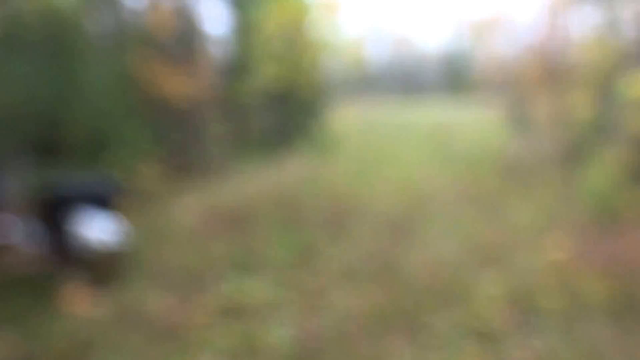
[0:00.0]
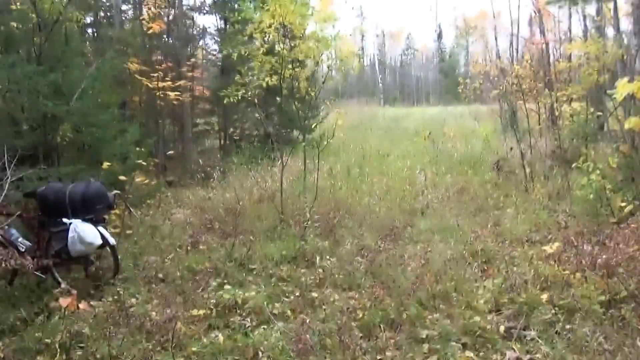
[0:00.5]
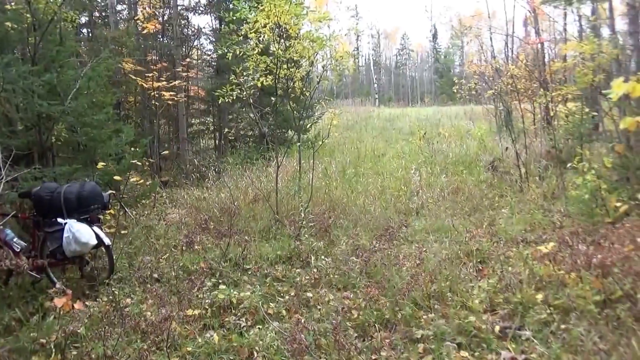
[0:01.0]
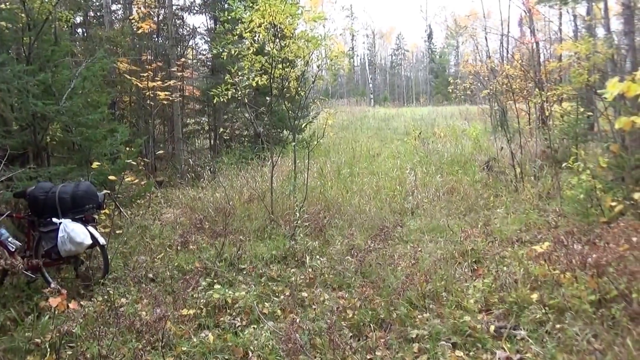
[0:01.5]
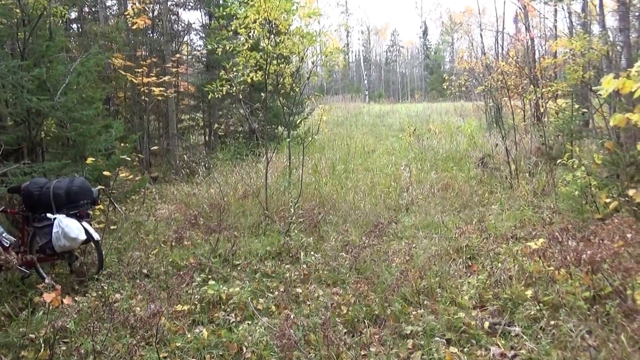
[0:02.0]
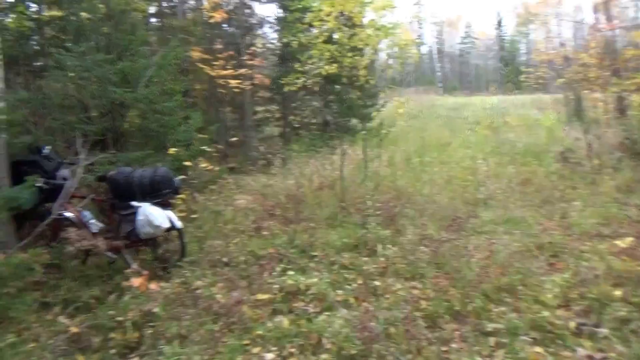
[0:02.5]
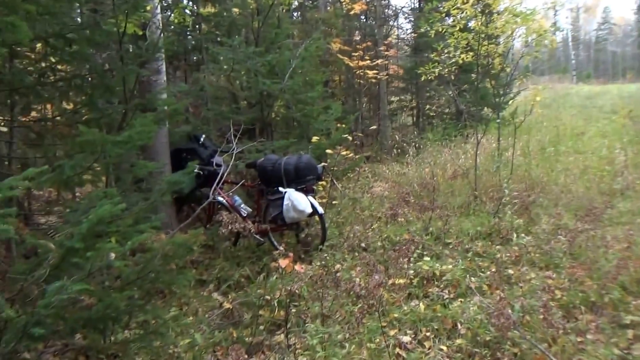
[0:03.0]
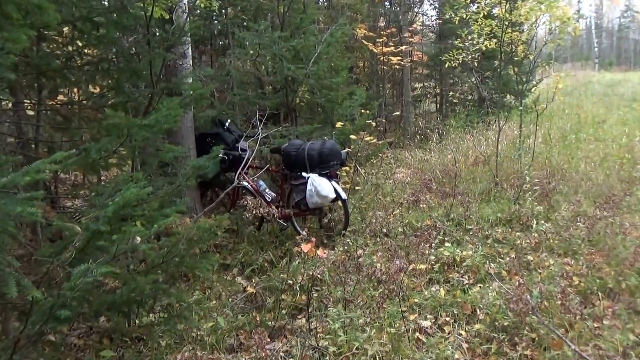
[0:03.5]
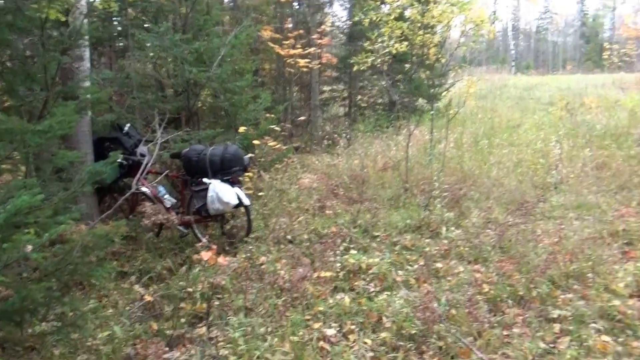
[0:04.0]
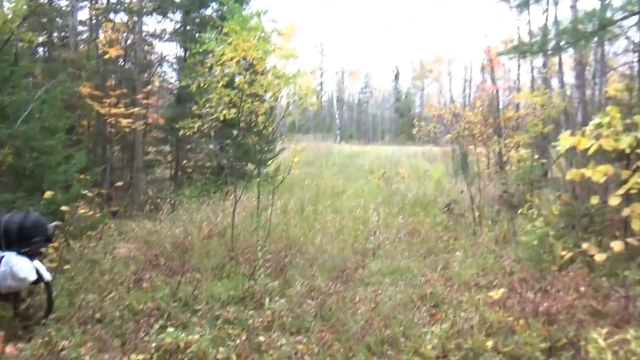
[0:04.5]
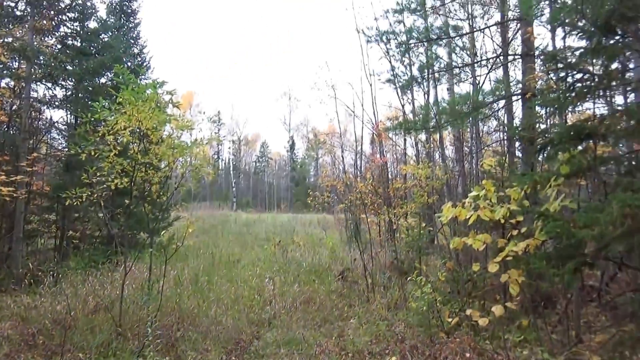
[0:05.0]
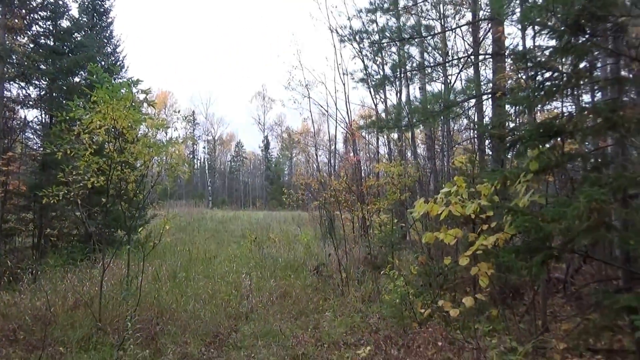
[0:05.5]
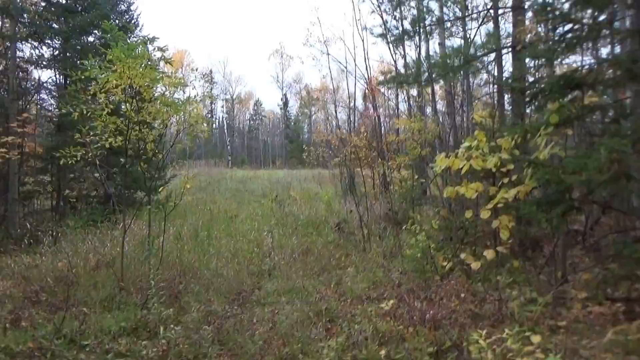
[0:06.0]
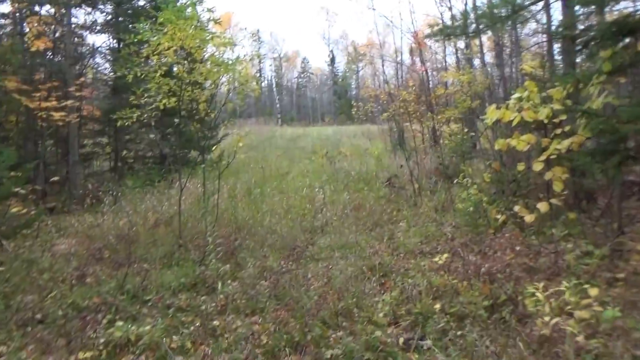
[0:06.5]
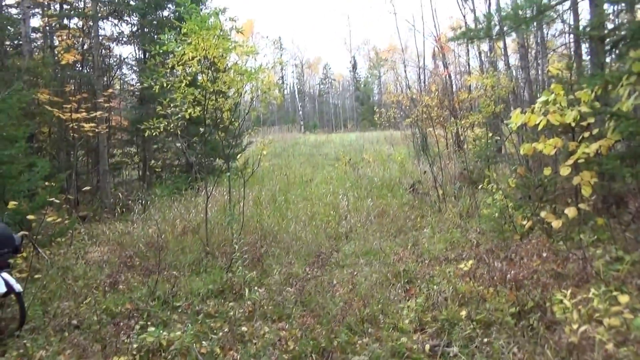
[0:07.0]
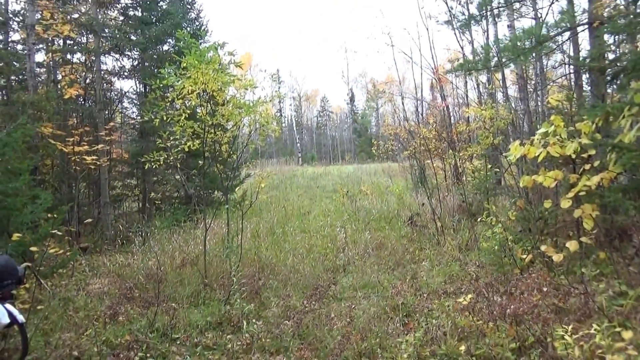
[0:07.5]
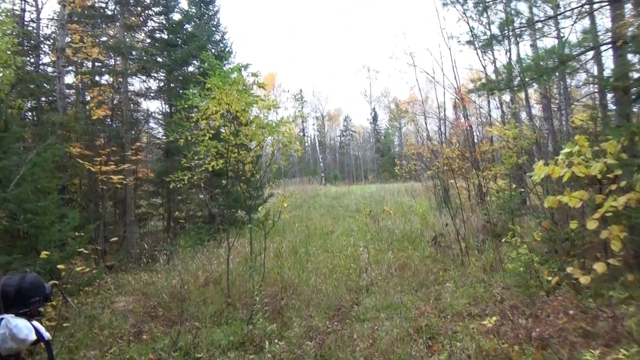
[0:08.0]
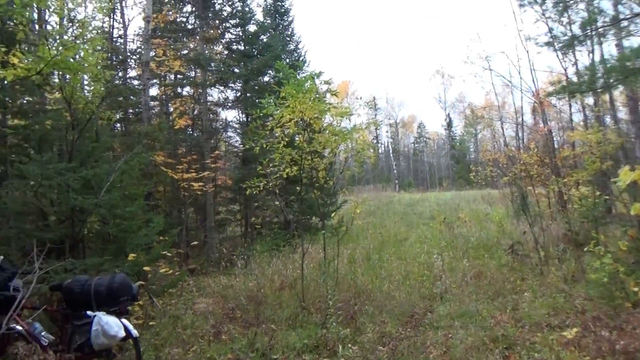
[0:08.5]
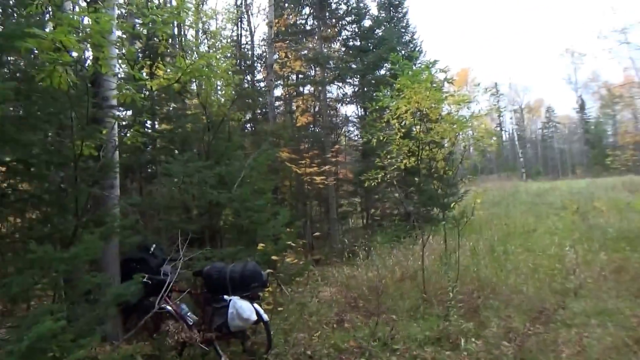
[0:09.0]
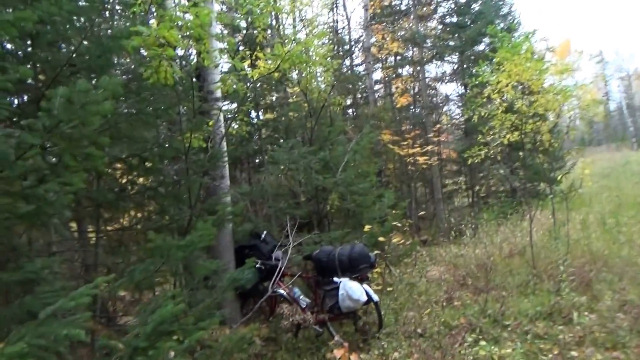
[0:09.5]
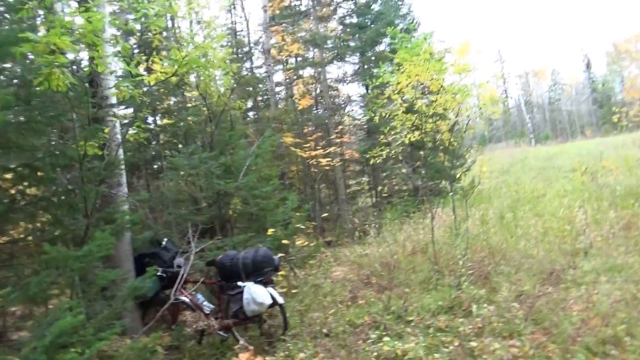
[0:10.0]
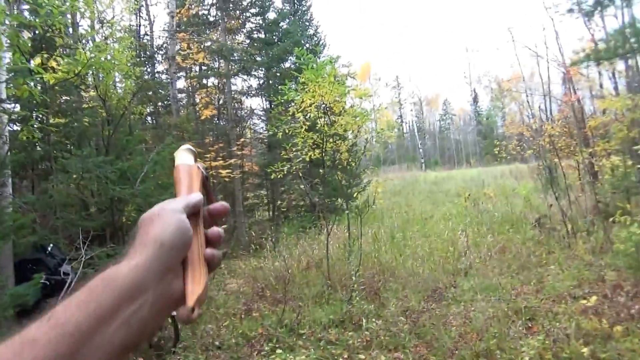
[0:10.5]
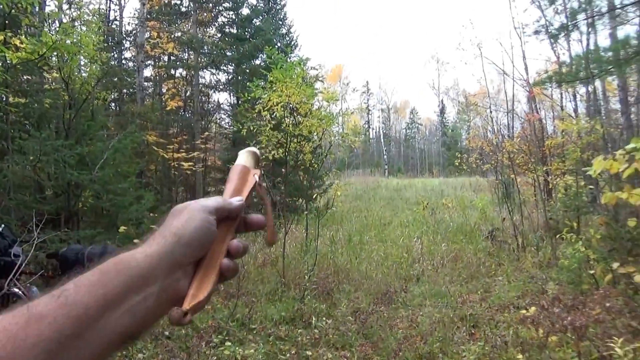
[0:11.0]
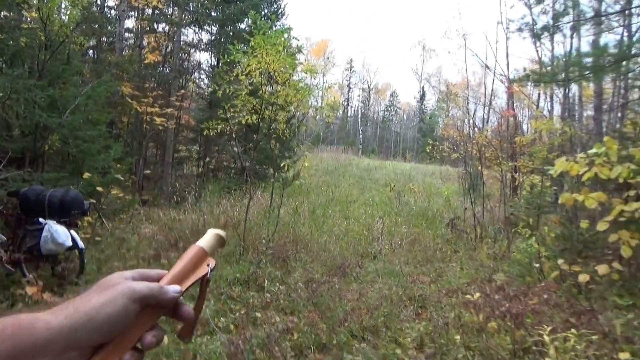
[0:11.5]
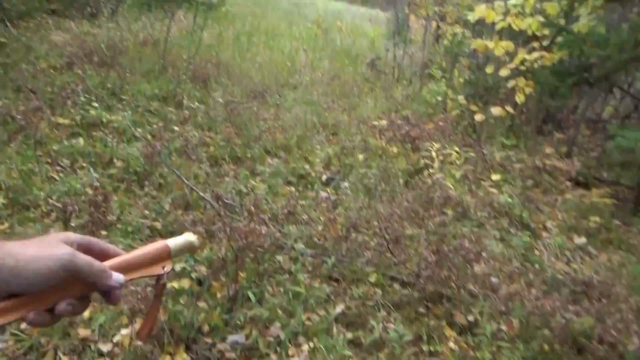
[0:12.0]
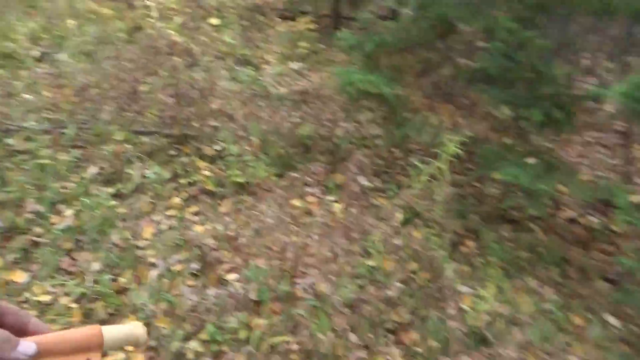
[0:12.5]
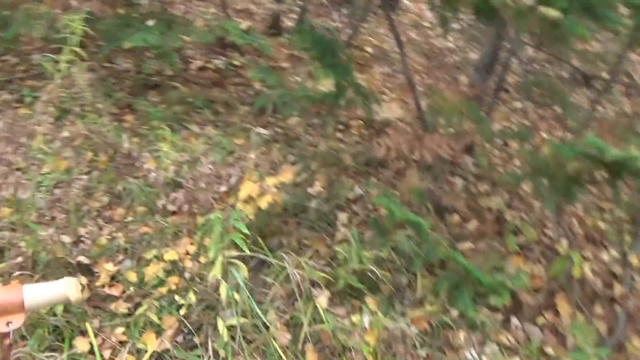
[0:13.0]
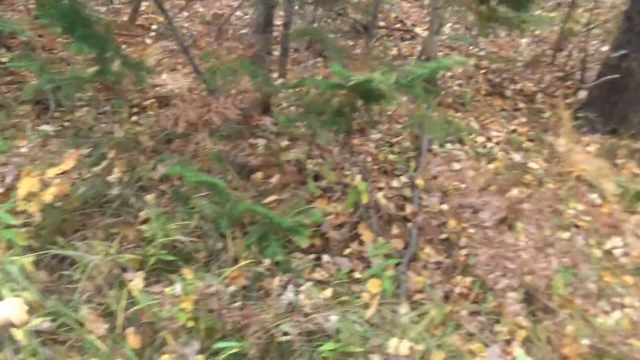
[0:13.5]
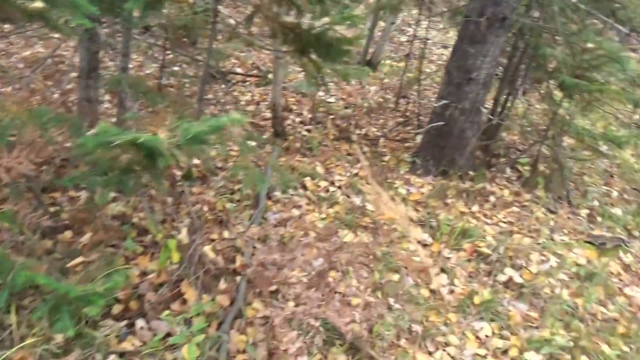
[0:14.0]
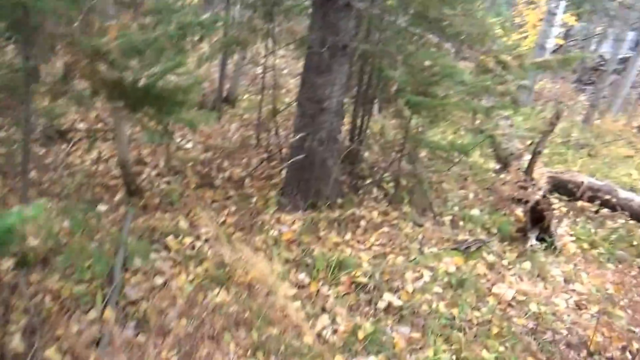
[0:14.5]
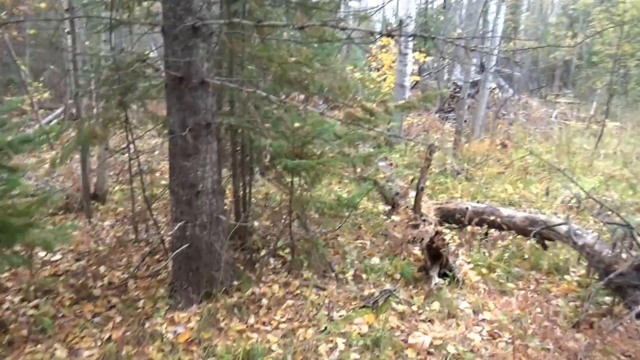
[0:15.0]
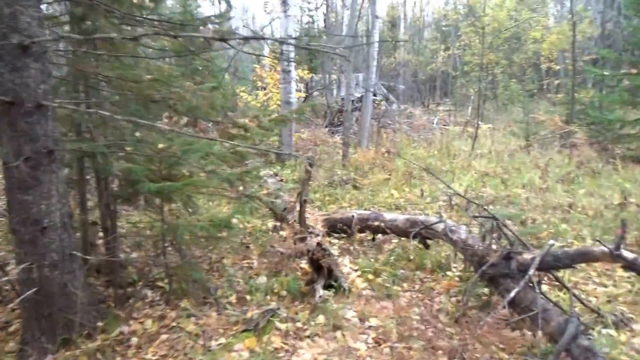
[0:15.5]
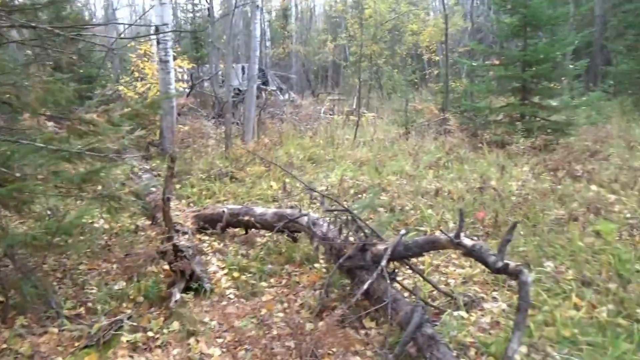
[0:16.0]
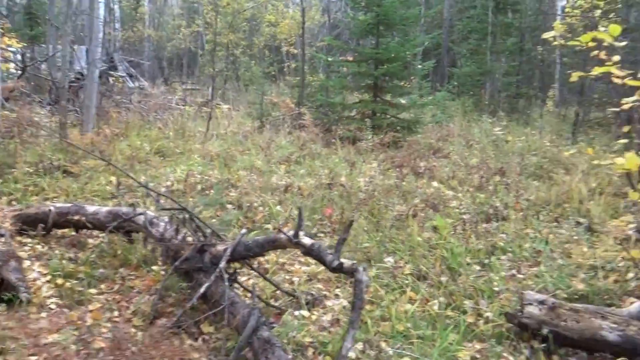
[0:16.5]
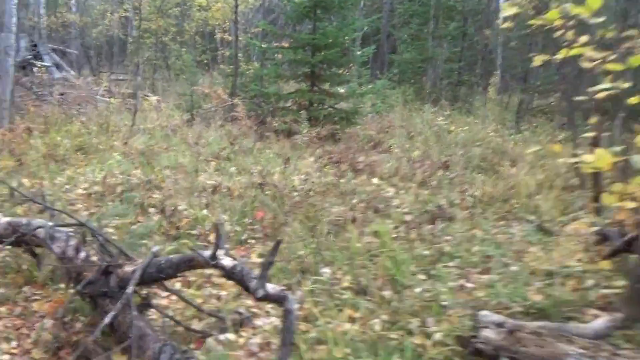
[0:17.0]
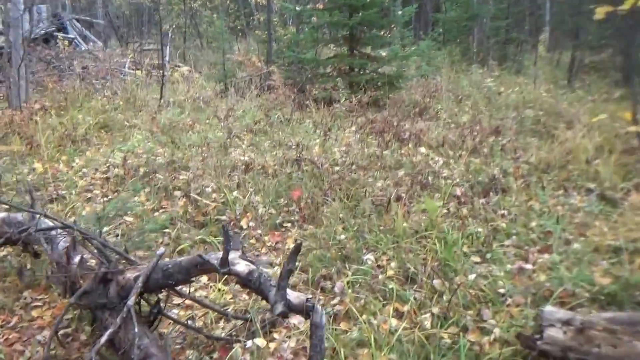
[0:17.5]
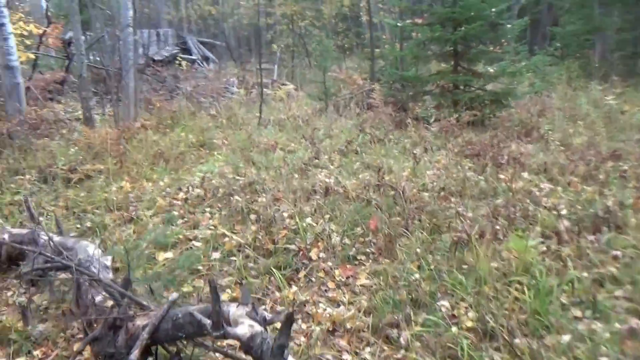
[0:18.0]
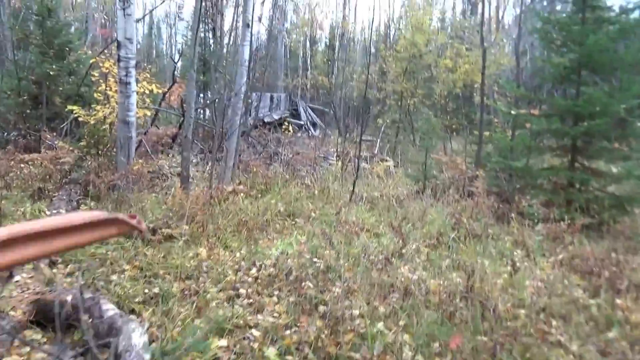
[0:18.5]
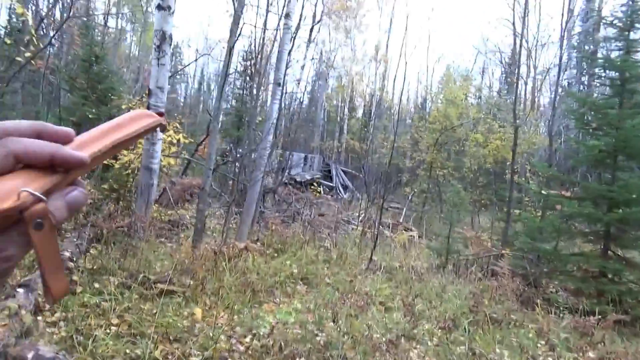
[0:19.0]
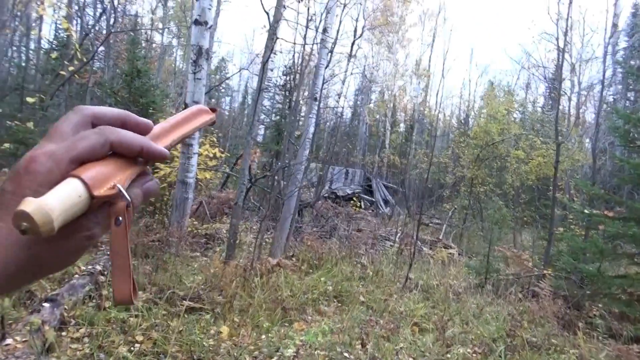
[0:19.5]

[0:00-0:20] The video opens on a blurred shot that comes into focus on an outdoor view: green grass in the foreground and lots of trees in the background and on the sides. On the left-hand side there is a bike with some luggage and bags stored on top of it. The camera pans left and centres on the bike, which is parked at the side, rested next to a tree branch. The camera then pans smoothly right across the open grass area, then back left and right again. A person's left hand appears, holding some kind of tool, a thin object with a loop handle and a sleeve or cover on it. The camera pans down and rotates to the right, showing leaves on the ground and green leaves at the bottoms of the trees. It rotates again, and the person walks forward over a fallen tree branch.